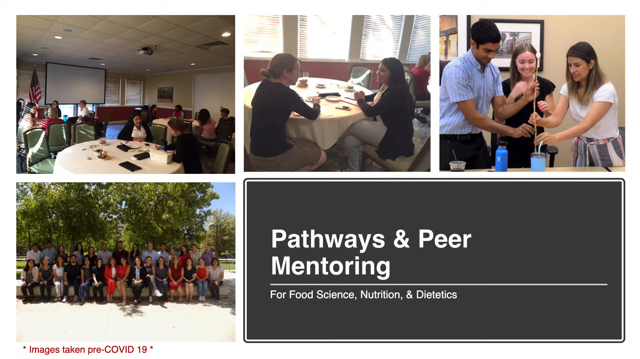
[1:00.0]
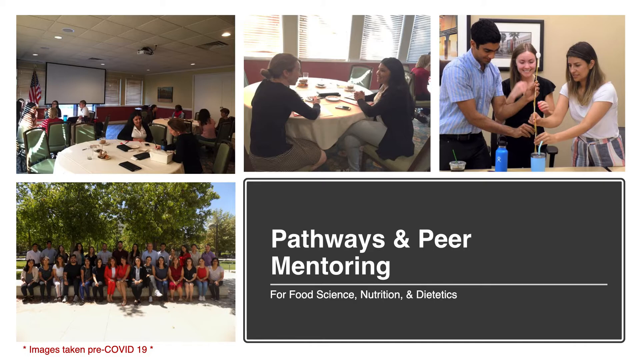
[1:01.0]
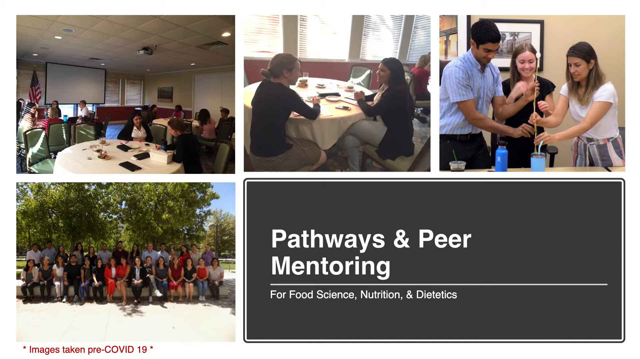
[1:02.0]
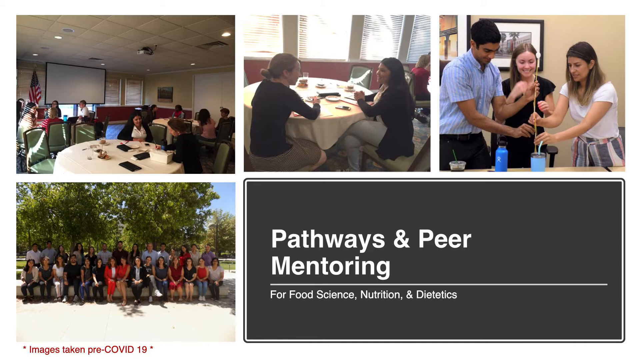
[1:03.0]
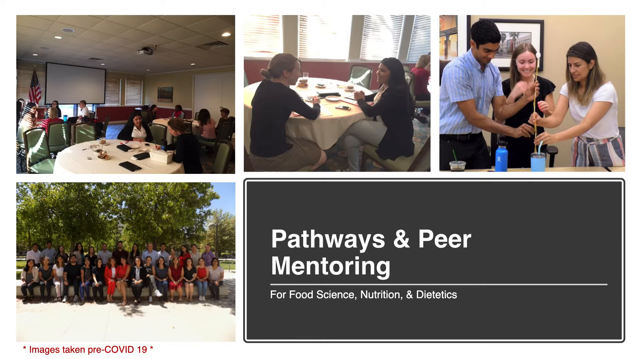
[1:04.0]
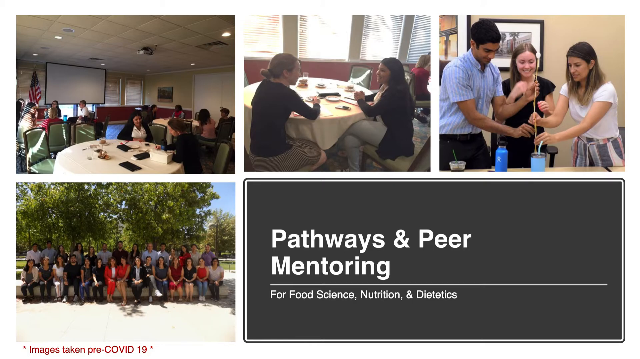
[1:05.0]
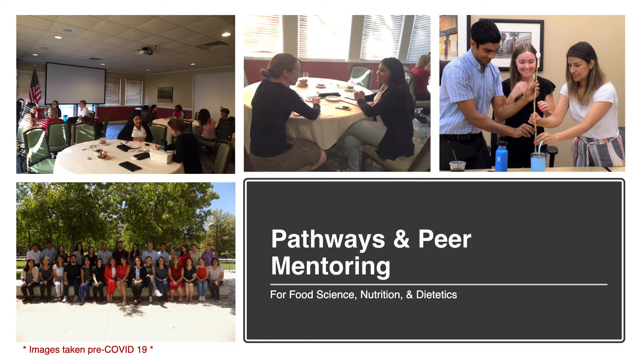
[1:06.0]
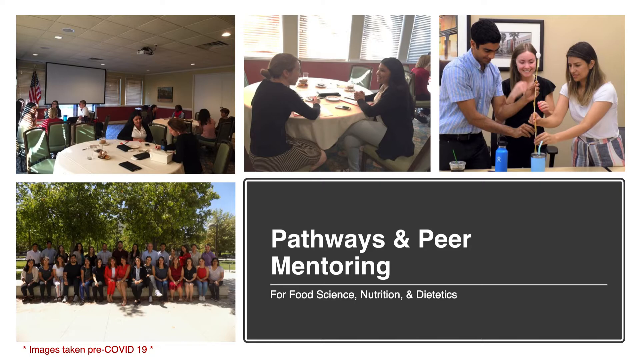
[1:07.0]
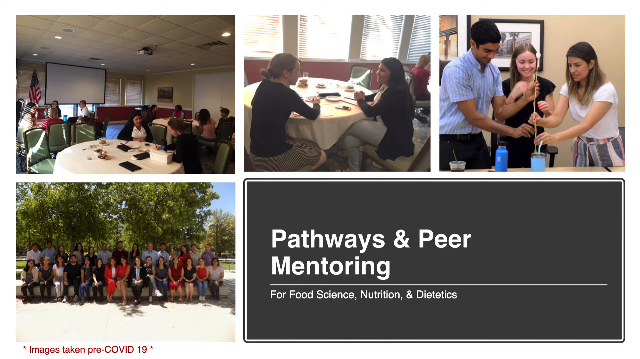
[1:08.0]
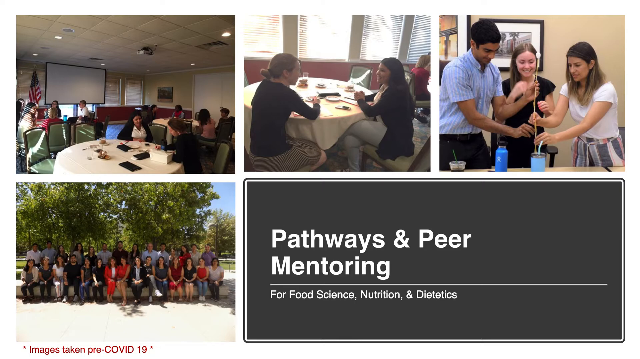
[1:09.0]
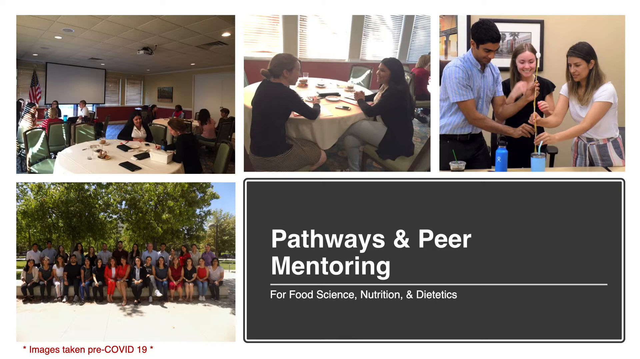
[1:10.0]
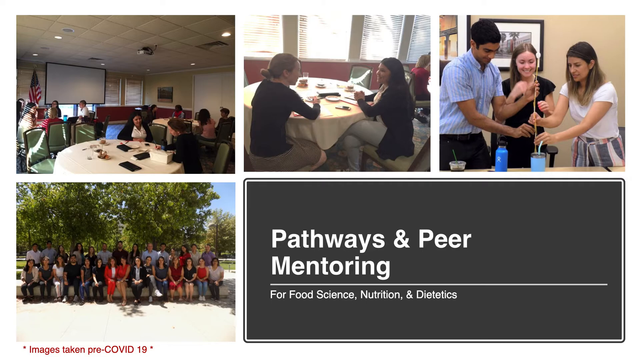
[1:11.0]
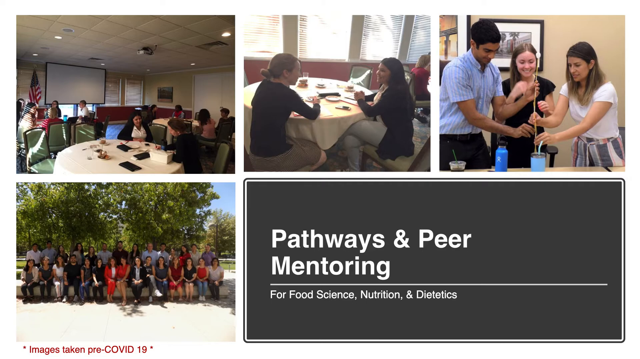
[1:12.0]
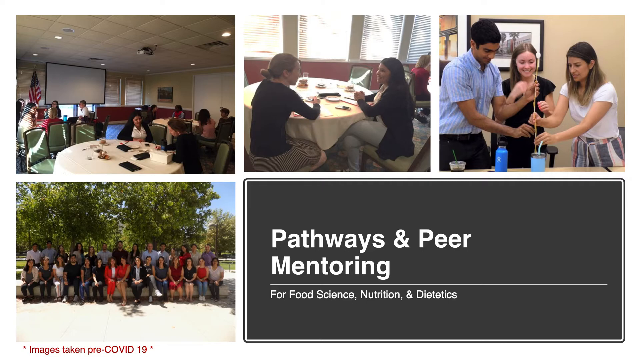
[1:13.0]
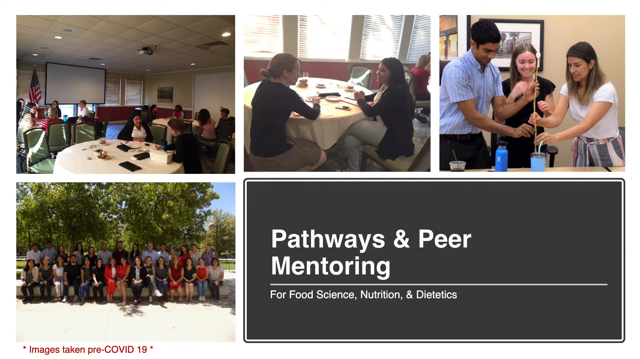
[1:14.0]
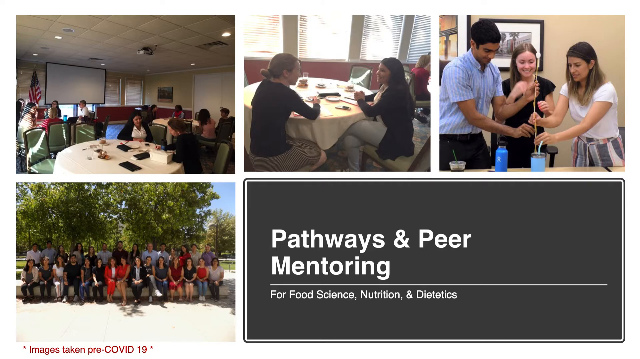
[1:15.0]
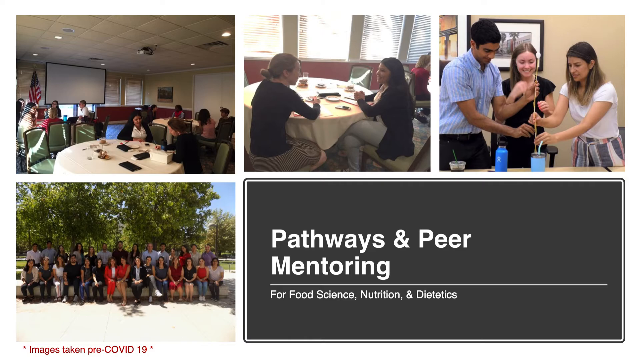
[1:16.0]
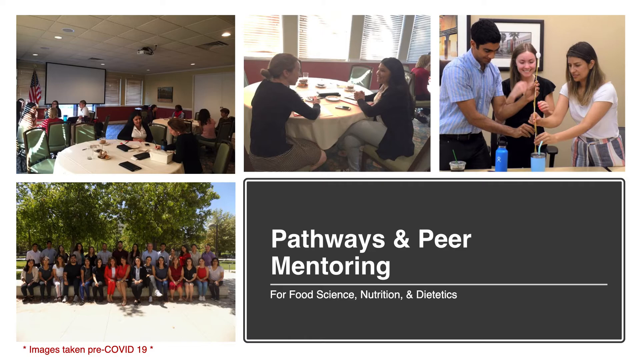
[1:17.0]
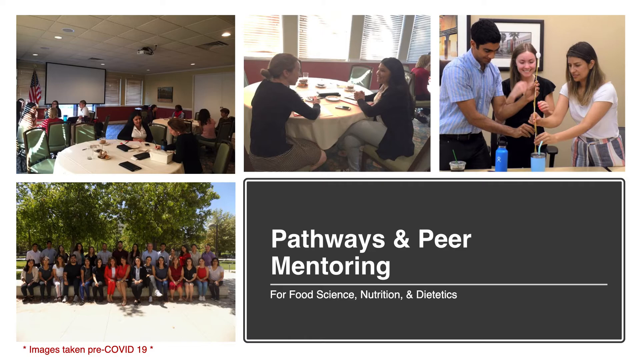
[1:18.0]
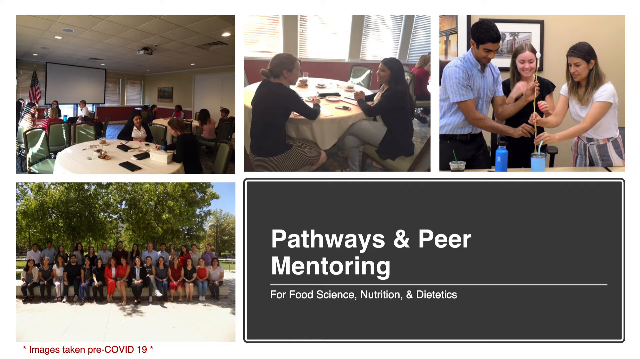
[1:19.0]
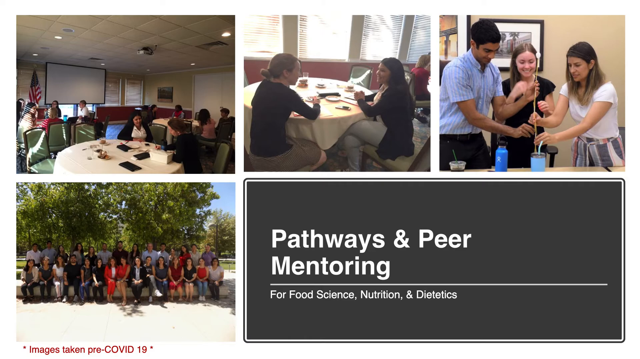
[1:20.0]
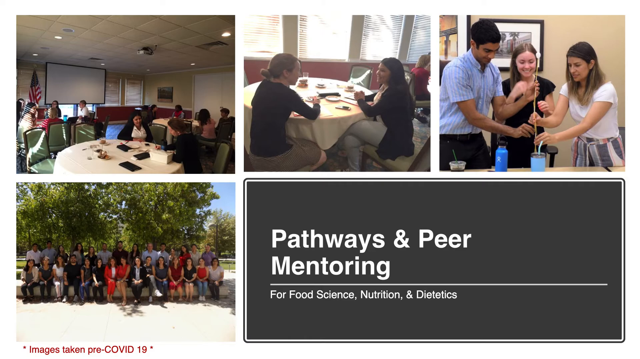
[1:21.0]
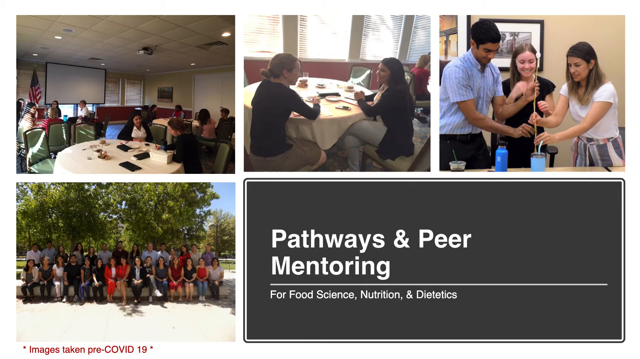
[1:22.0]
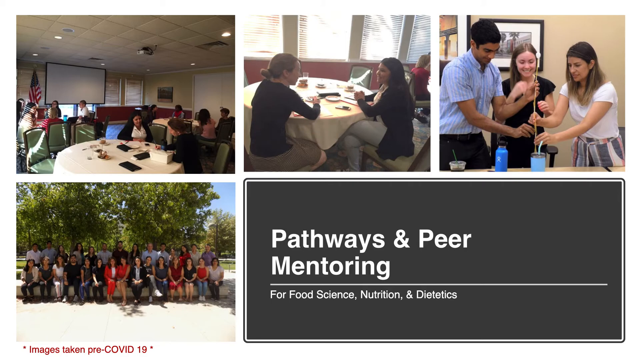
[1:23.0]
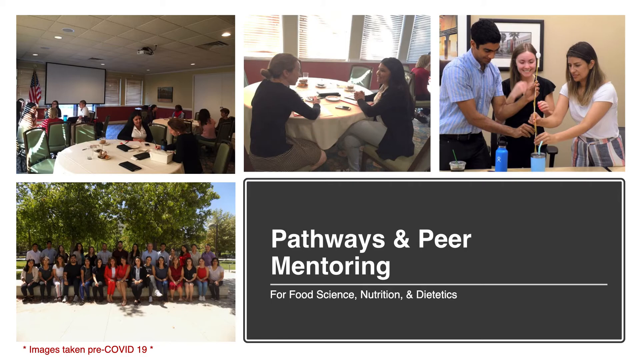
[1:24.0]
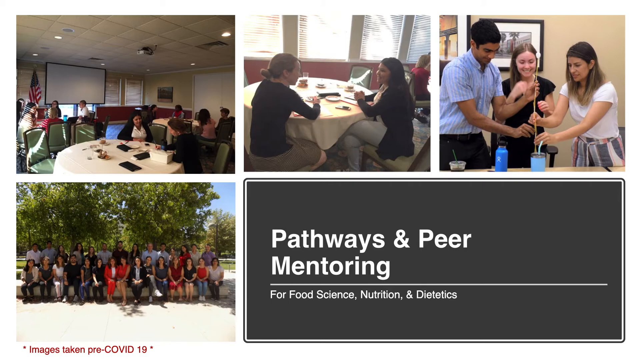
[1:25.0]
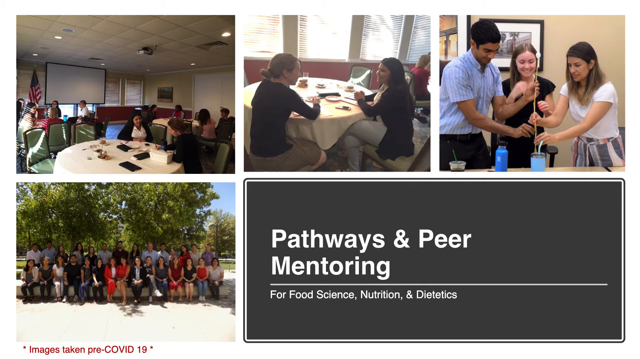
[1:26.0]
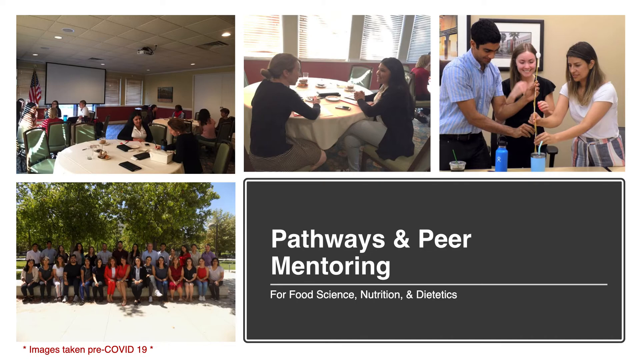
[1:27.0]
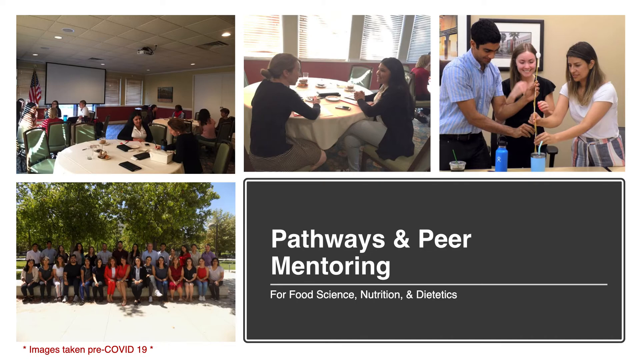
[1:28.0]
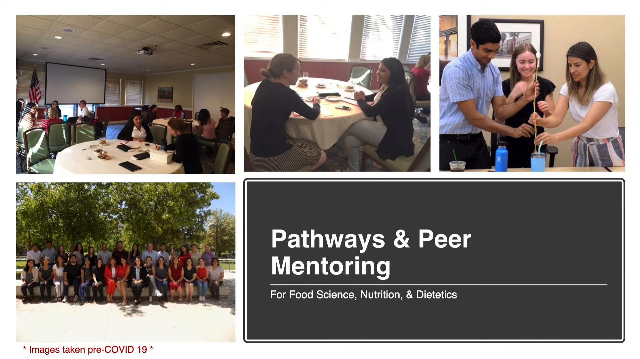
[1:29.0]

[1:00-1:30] A new set of images appears. At the bottom right, a title reads "Pathways and Peer Mentoring for Food Science, Nutrition, and Dietetics," with a series of still images around it. At the bottom left is a group photo of men and women, some sitting and some standing in front of trees, with many sitting on benches. Above it, at the top left, is a room filled with round tables, apparently some sort of conference or meeting, with people all talking to one another. To the right is what looks like the same room from a different angle, possibly a conference or a luncheon, showing two women talking. On the right, what looks like three people, a man and two young women, have their hands together as if holding onto possibly some sort of vine or plant, maybe working on some kind of experiment or nutrition-related activity.